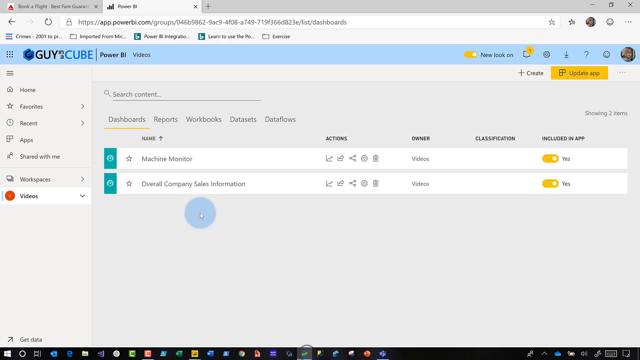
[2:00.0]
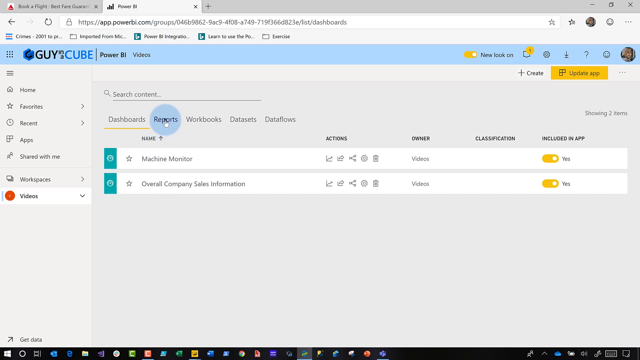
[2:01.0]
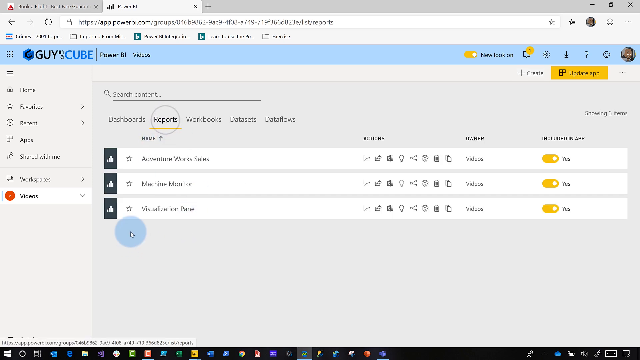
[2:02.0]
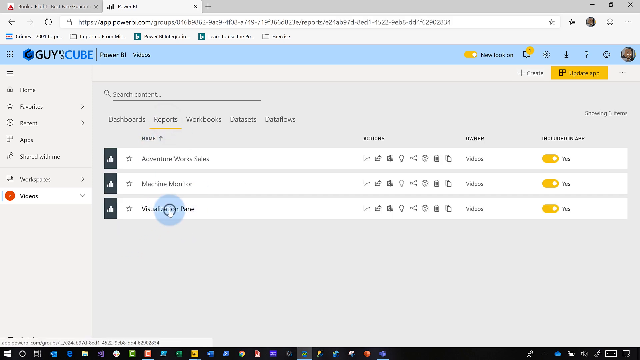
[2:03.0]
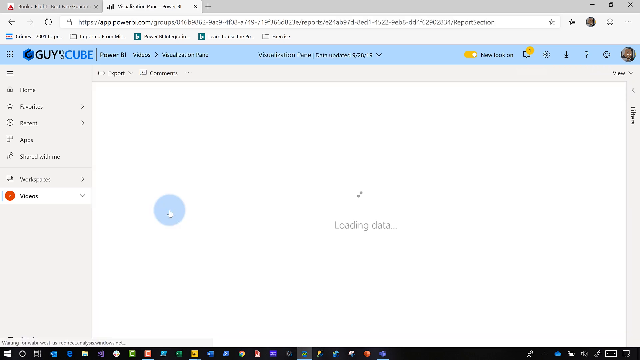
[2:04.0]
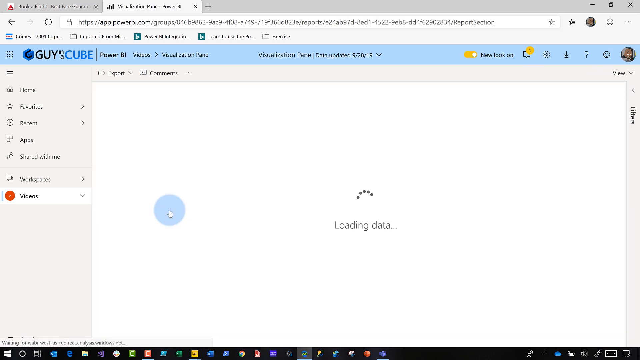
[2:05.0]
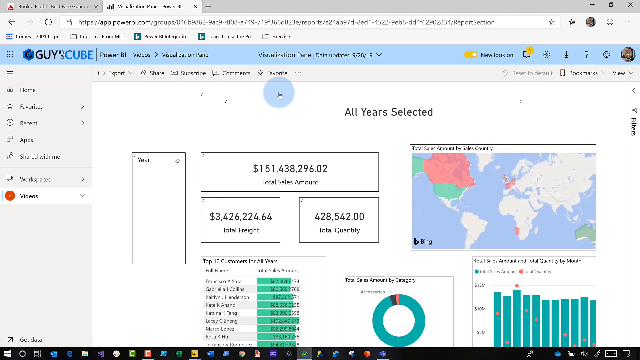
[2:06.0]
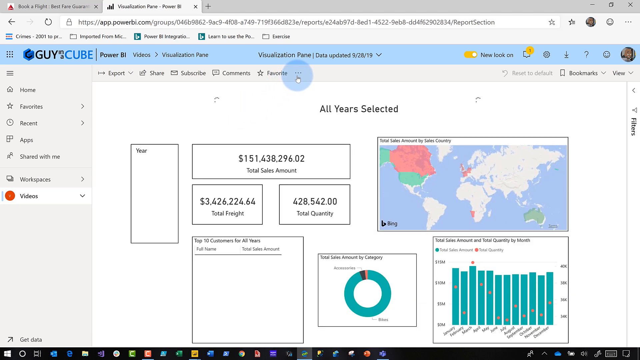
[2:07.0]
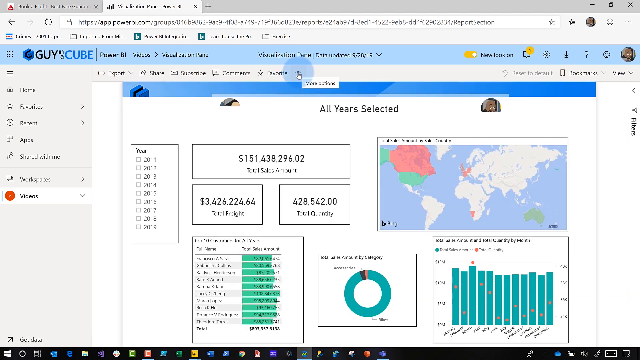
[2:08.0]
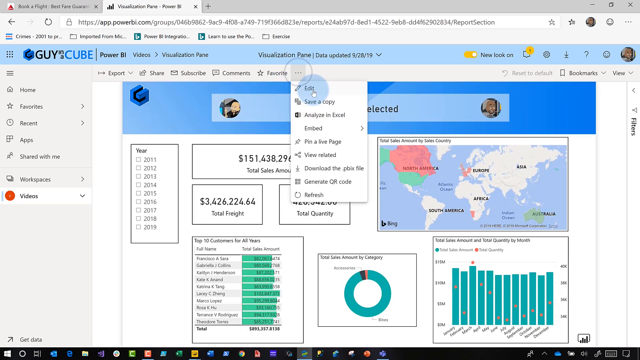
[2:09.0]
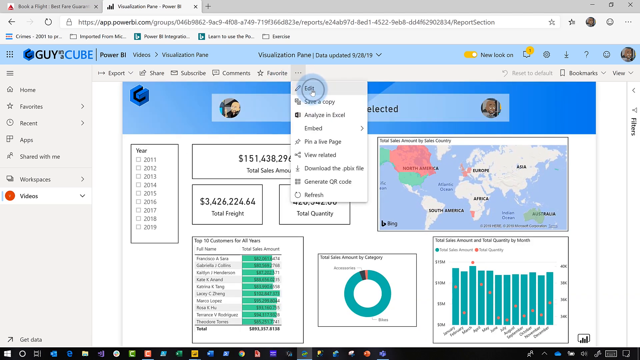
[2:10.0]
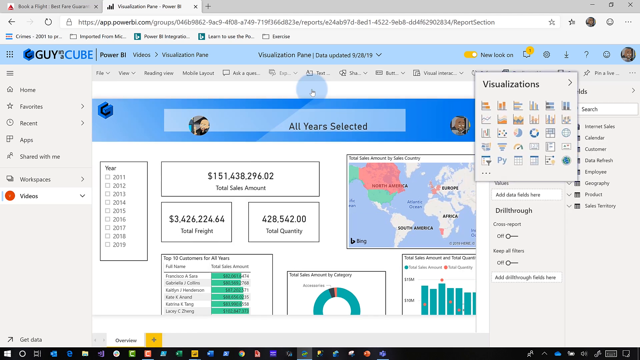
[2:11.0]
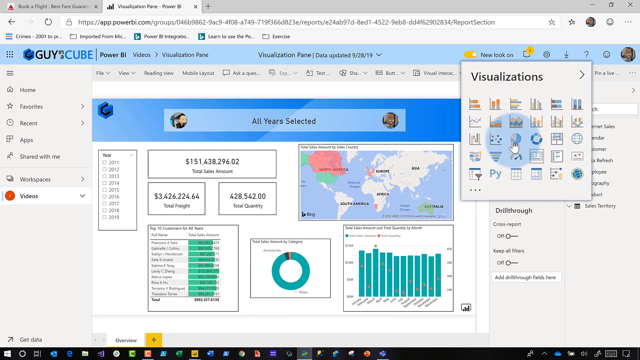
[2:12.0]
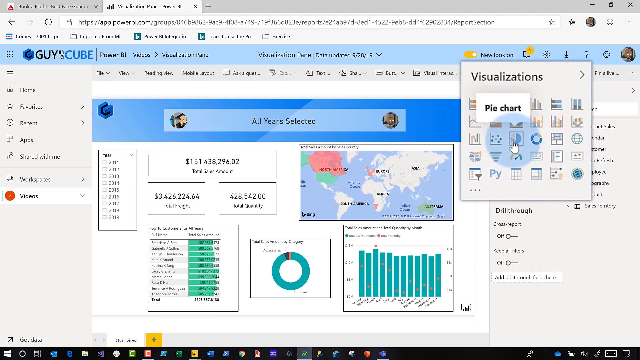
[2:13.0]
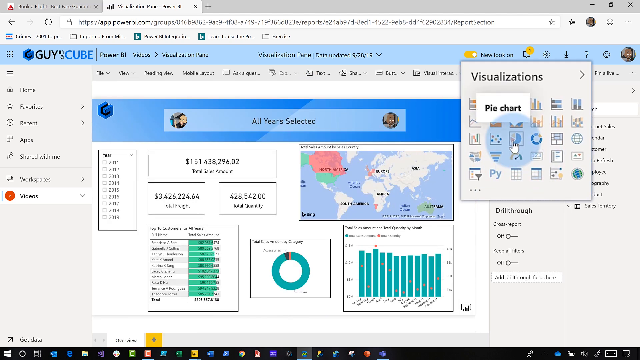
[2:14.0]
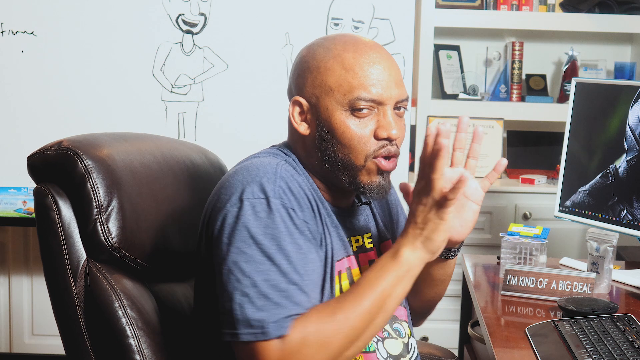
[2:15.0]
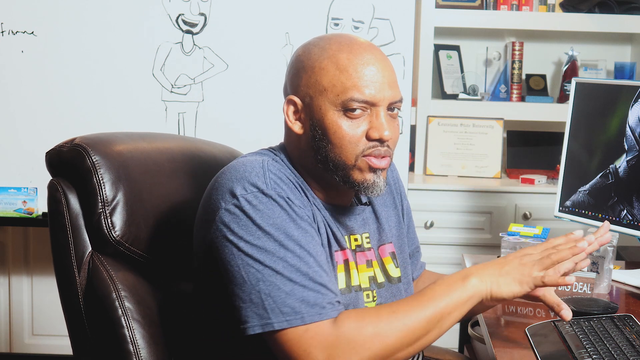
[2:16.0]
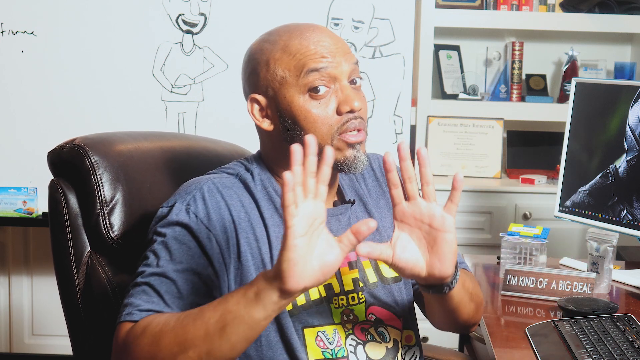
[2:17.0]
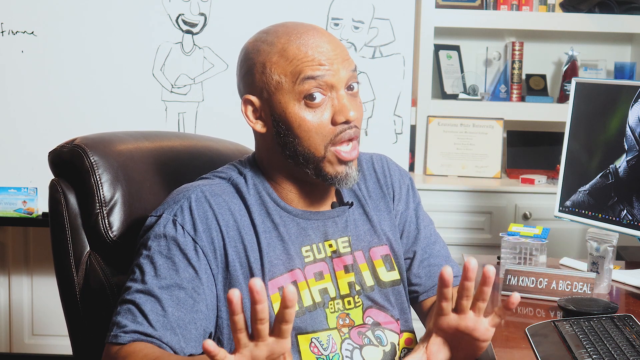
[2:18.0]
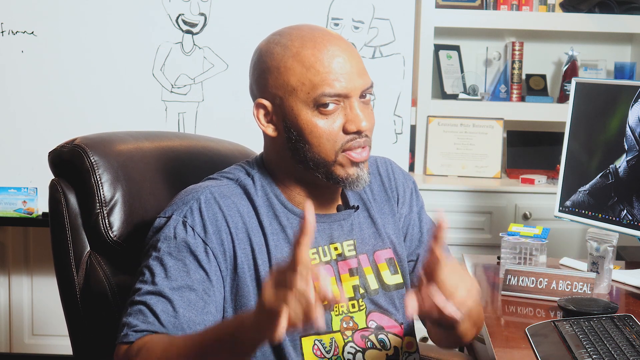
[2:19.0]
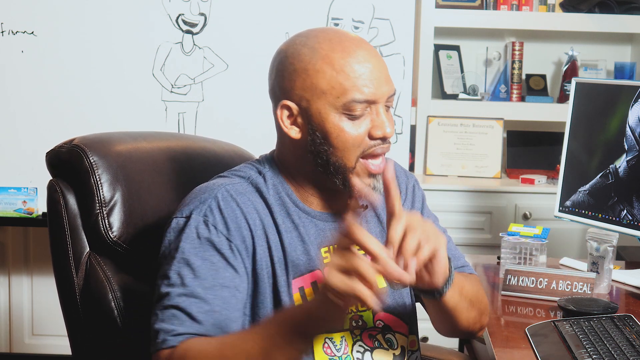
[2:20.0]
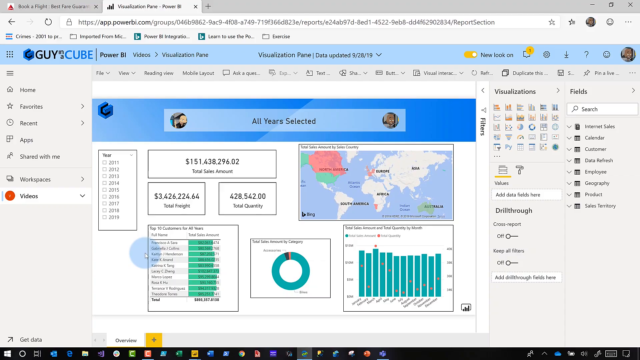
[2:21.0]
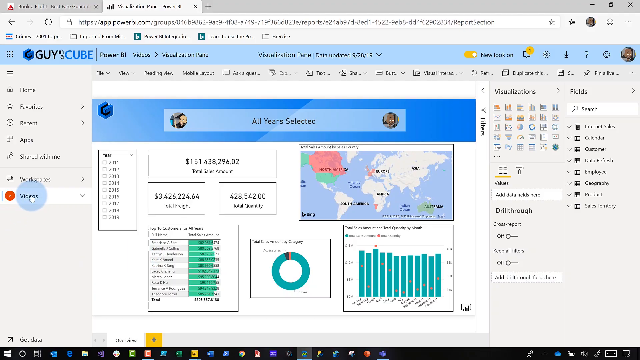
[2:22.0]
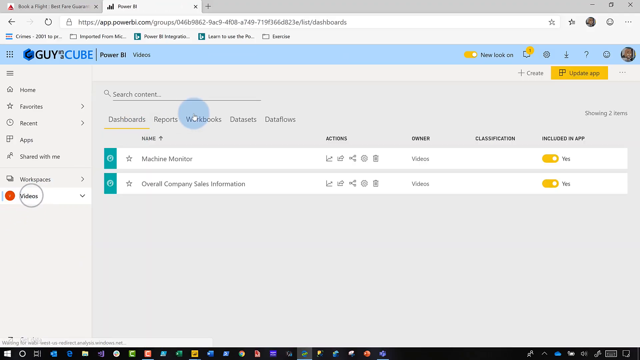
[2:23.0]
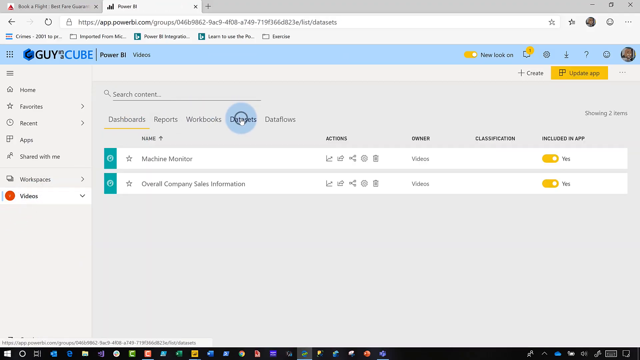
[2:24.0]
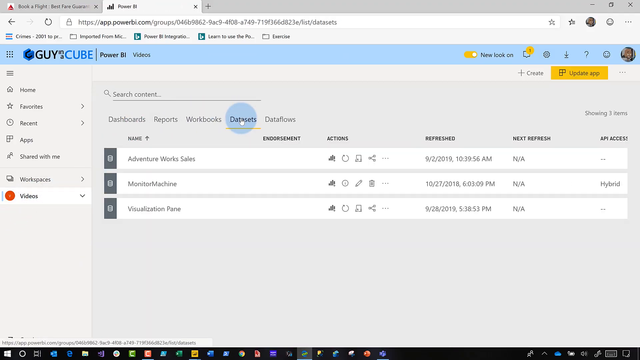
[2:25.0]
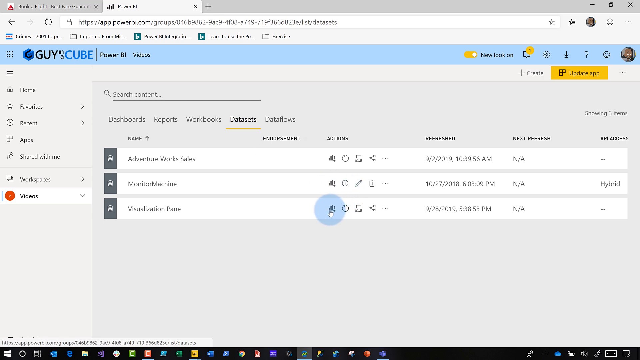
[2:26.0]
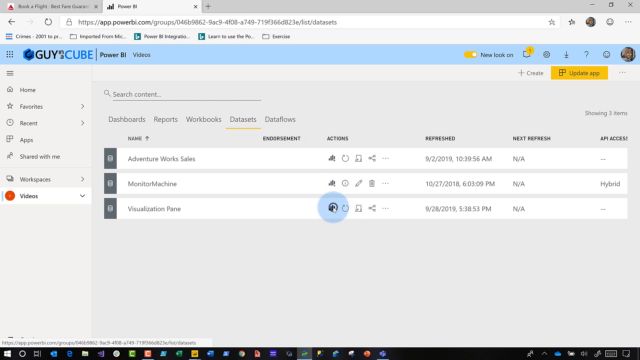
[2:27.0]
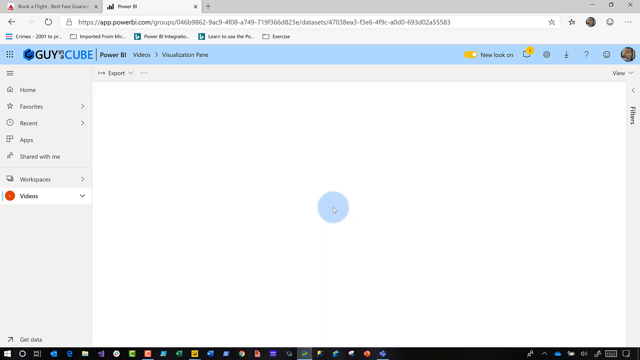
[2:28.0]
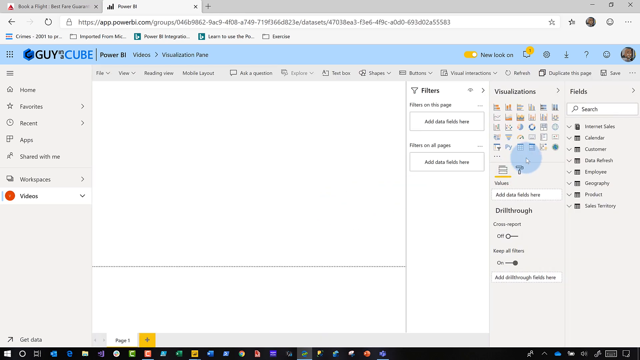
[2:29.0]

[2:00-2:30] A screen from a website called powerbuy.com is shown, currently on the "videos" tab at the bottom. There is a search bar reading "search content," and below it five tabs: "dashboards," "reports," "workbooks," "data sets," and "data flows." The user clicks "reports," which brings up three files: "adventure work sales," "machine monitor," and "visualization panel." He clicks the visualization option, which shows the screen seen earlier in the video. He clicks the three-dot options and goes to "edit," and the visualizations tab appears on the right-hand side. The pie chart tool he removed from the panel is back in the middle, where it originally was. The camera cuts back to him talking with hand motions, and he turns his head back to the computer. The computer screen returns, and he clicks the videos tab, clicks "data sets," and clicks an option that says "create report" on the last file.